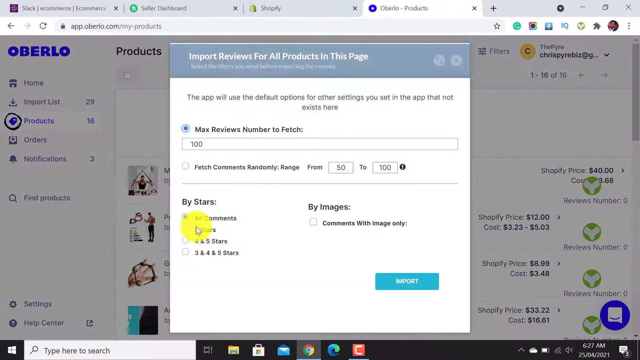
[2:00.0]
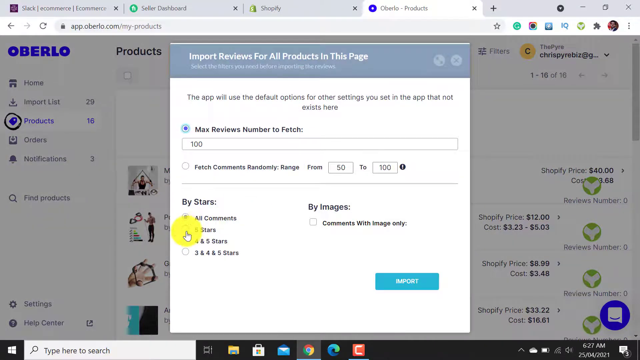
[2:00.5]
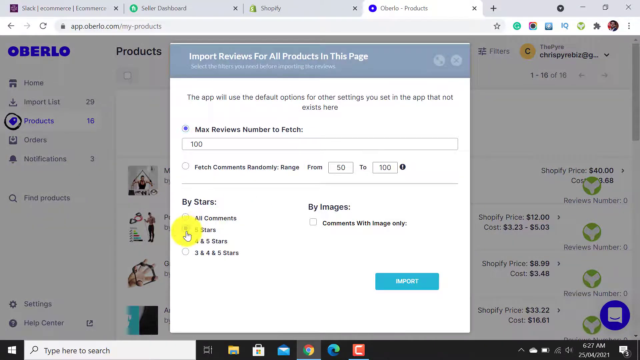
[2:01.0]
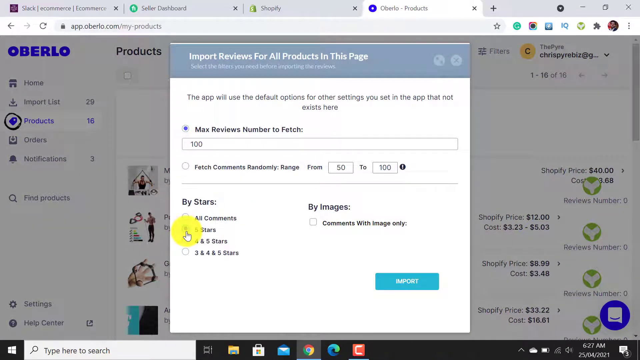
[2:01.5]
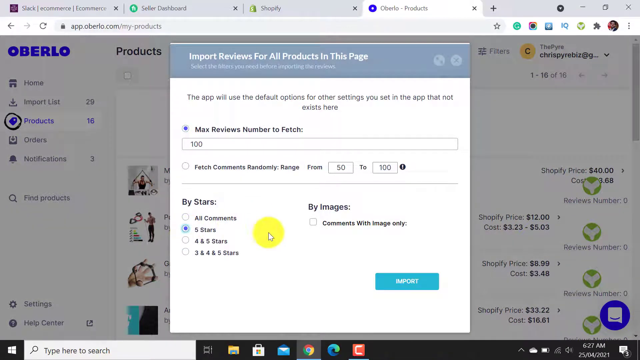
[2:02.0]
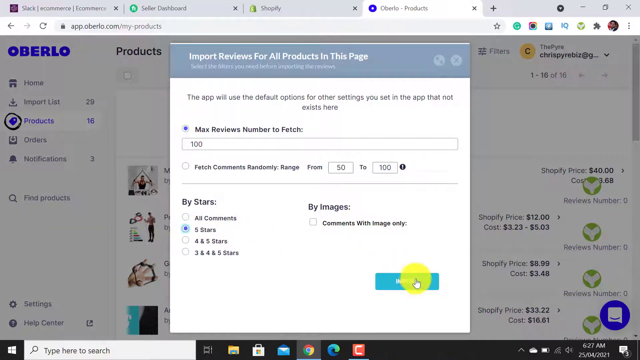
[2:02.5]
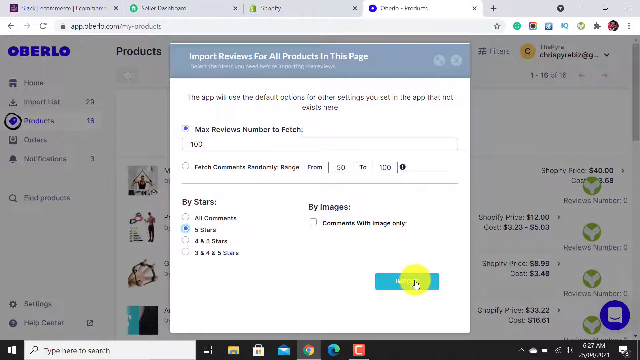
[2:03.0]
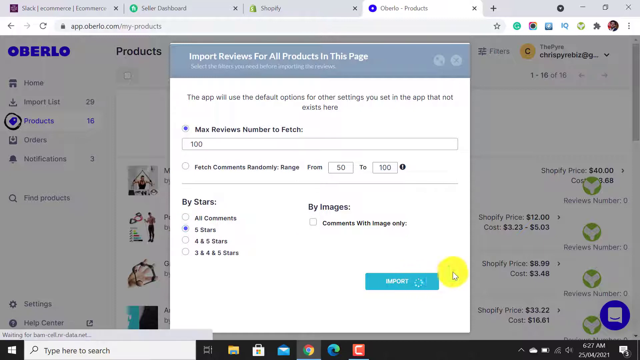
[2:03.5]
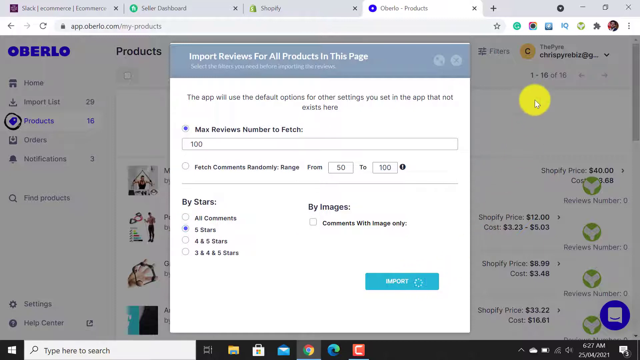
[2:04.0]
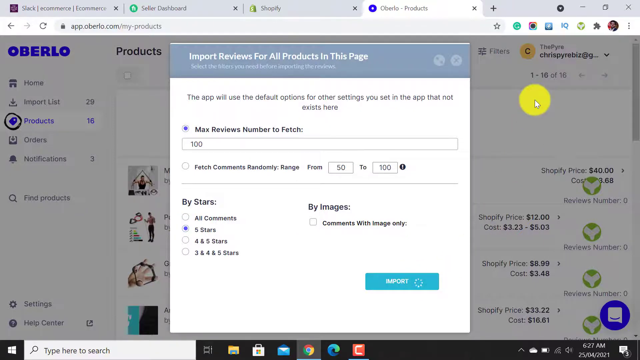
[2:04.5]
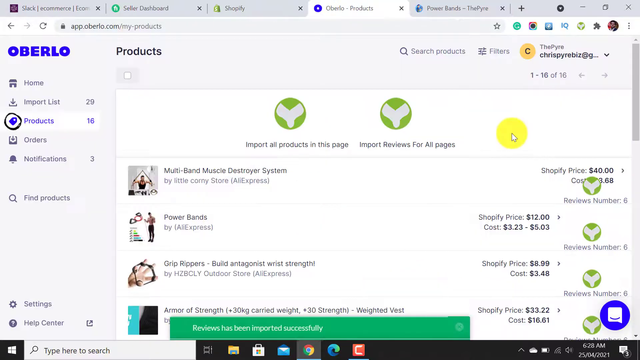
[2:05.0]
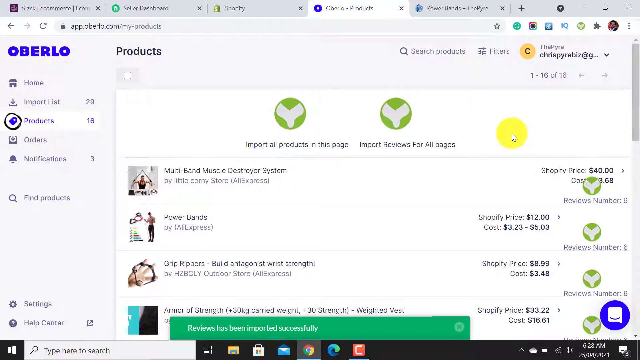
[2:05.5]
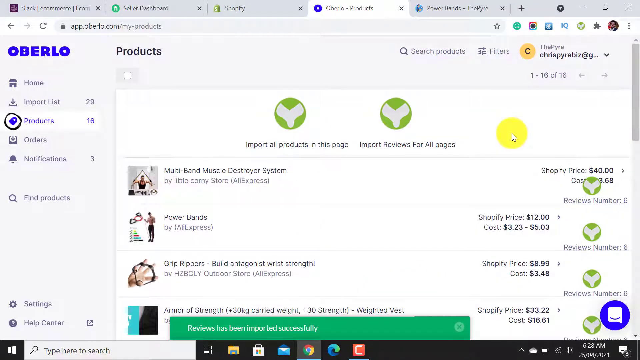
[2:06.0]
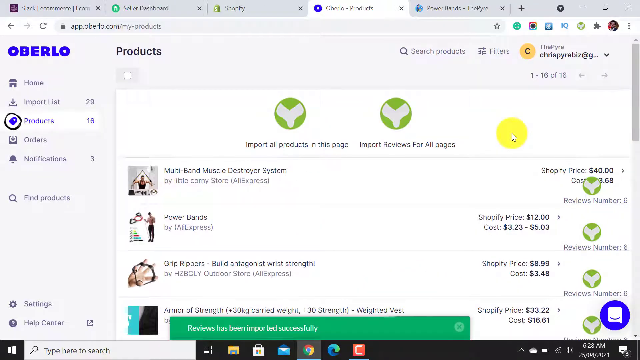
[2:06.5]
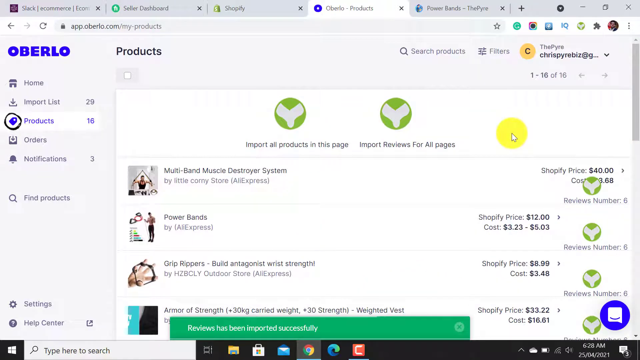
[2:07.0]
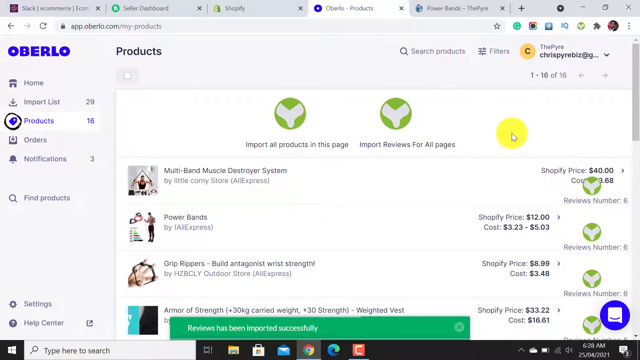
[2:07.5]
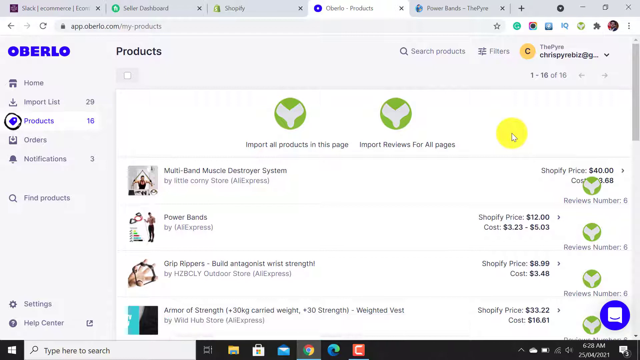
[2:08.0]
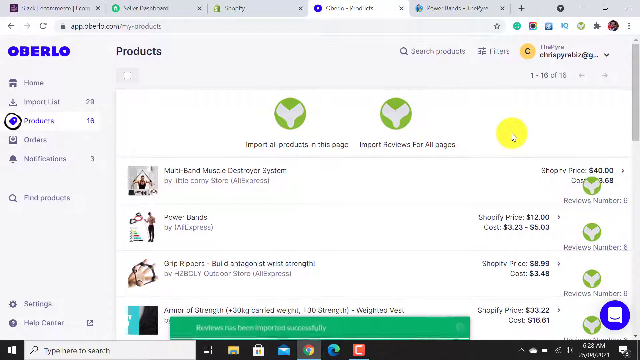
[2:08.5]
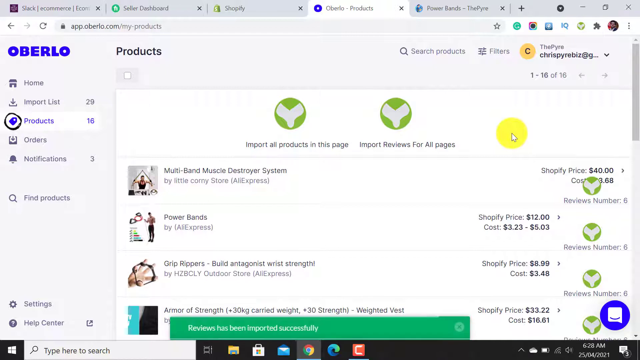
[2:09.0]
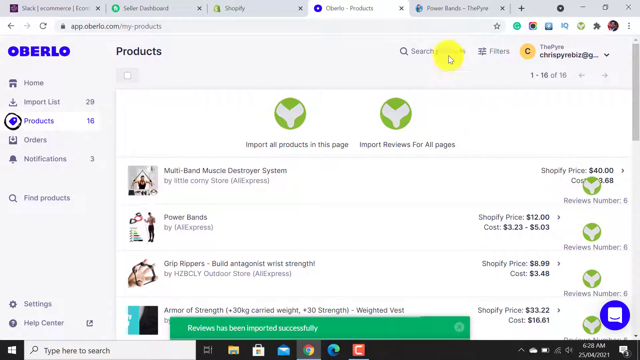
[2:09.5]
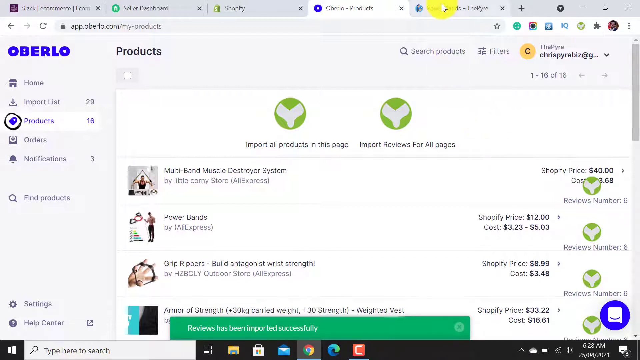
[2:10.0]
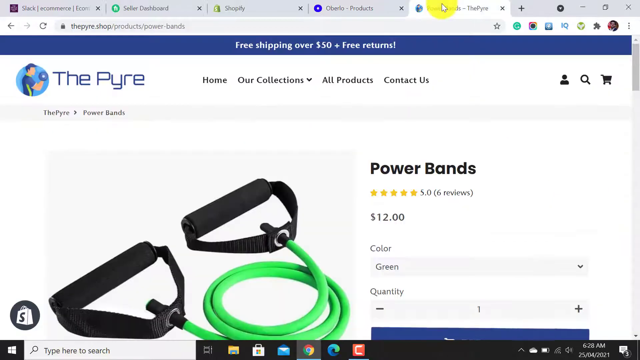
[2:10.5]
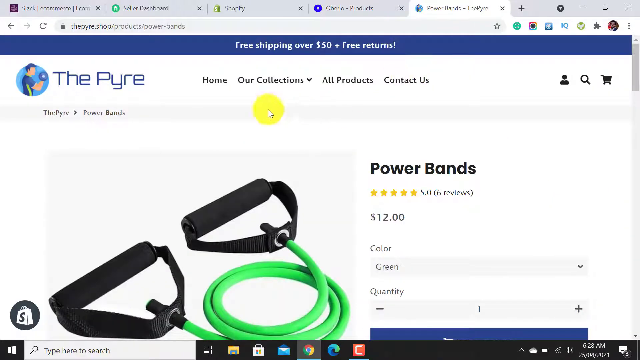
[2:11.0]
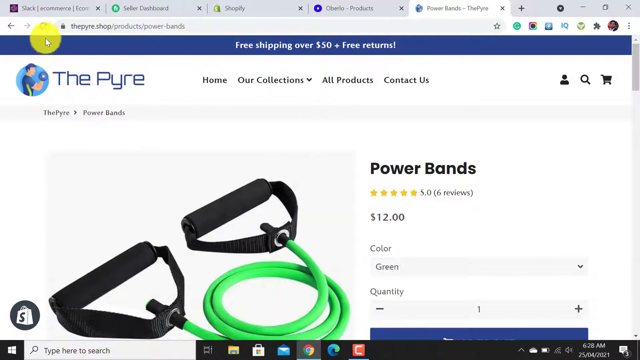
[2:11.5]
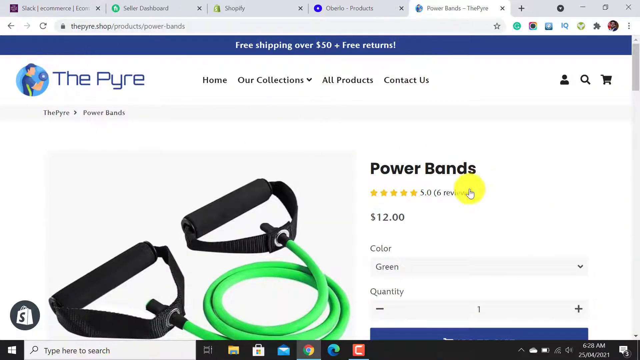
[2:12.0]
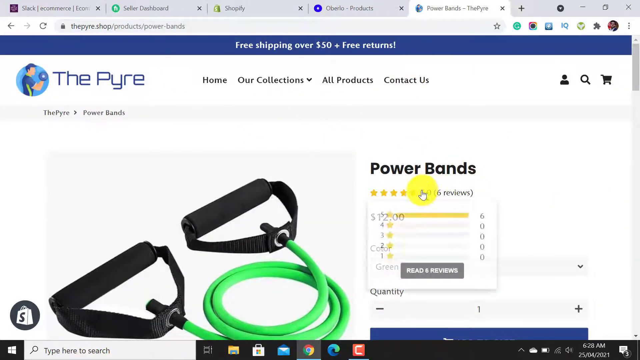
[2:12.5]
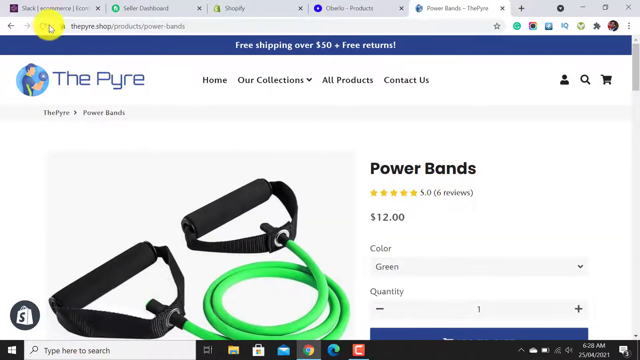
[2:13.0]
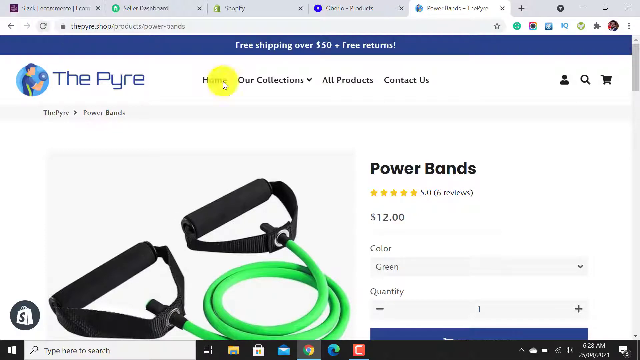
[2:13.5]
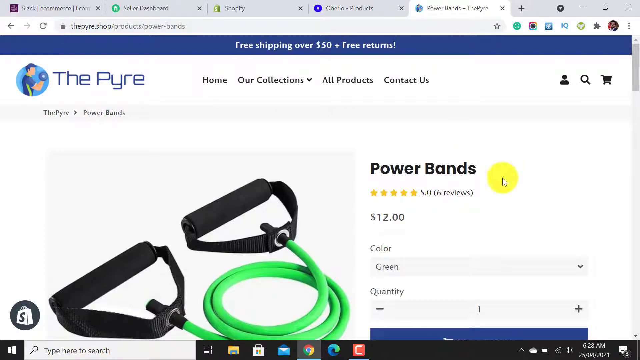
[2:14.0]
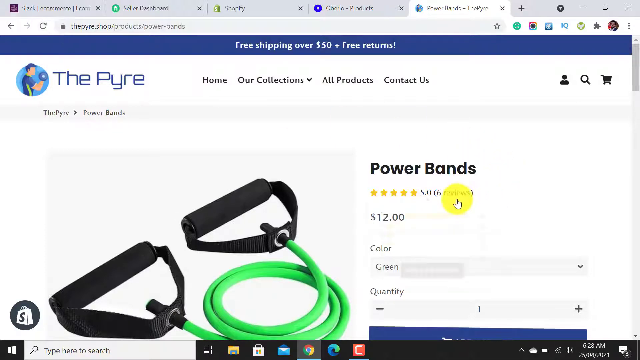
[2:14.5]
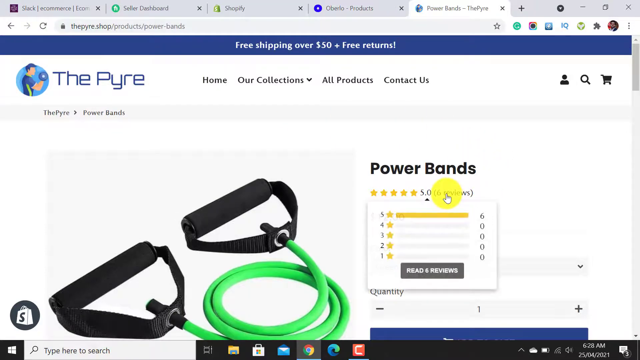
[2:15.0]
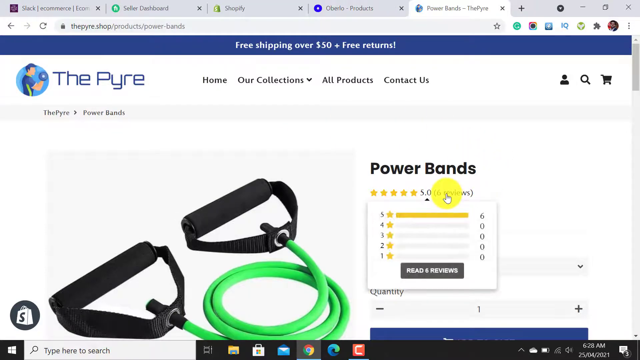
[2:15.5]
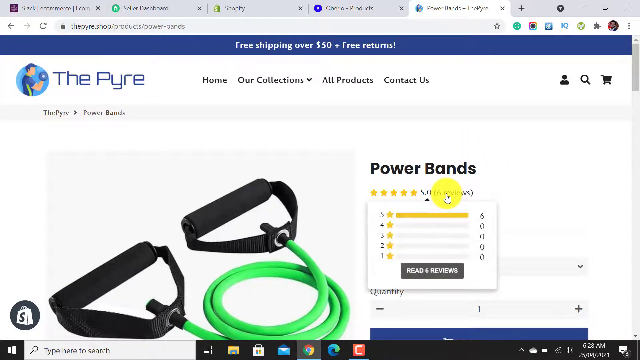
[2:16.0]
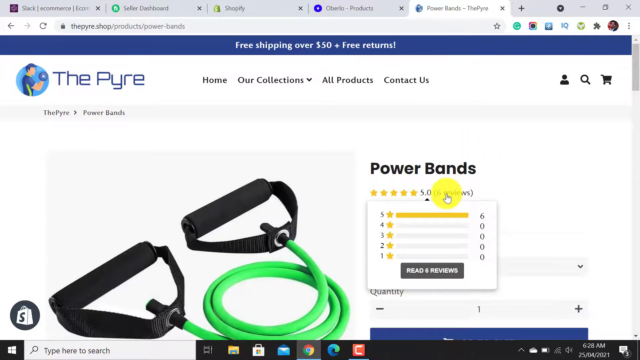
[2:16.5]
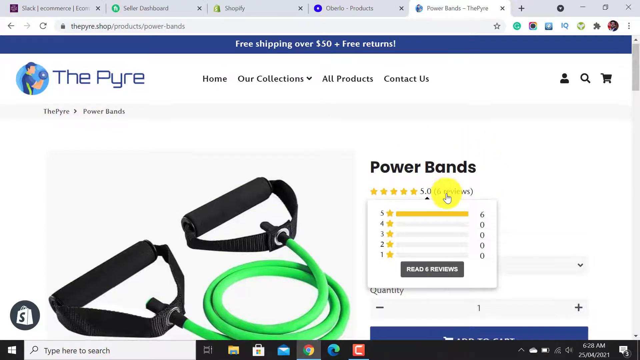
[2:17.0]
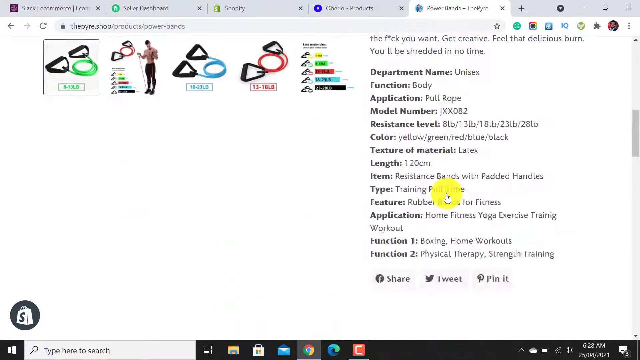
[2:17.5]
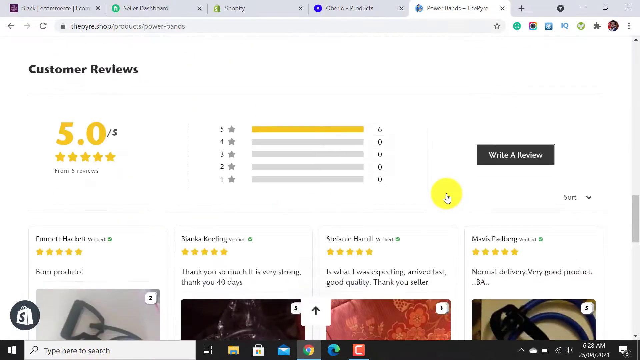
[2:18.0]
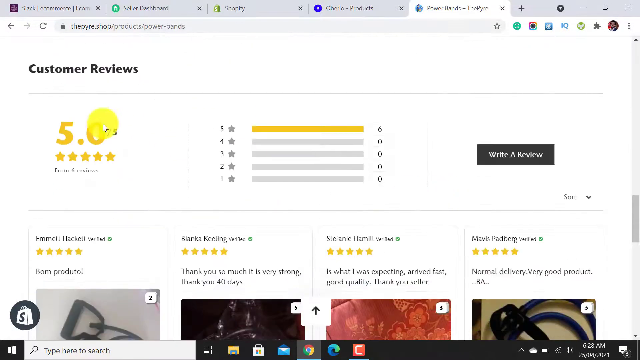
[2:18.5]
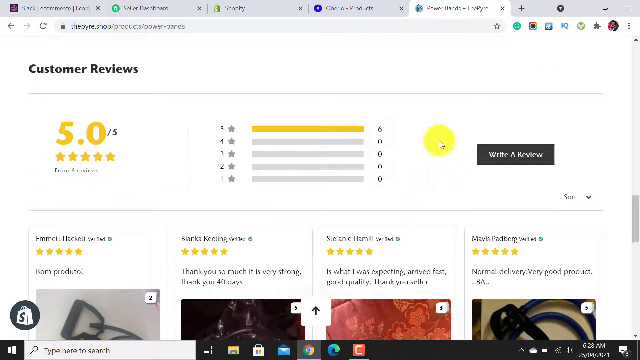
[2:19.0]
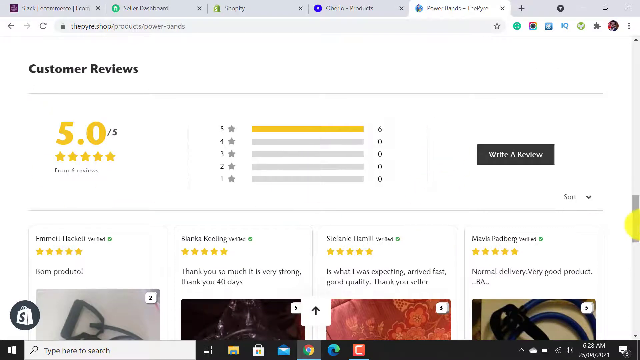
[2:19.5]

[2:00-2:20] Five stars is selected, comments are left off, and import is clicked, then import is selected on the confirmation screen. A confirmation says the reviews have been imported successfully. The user goes to a page called Pirie Power Bands, where six five-star reviews now appear. The page shows a green power band with two black handles. The user scrolls down the page.